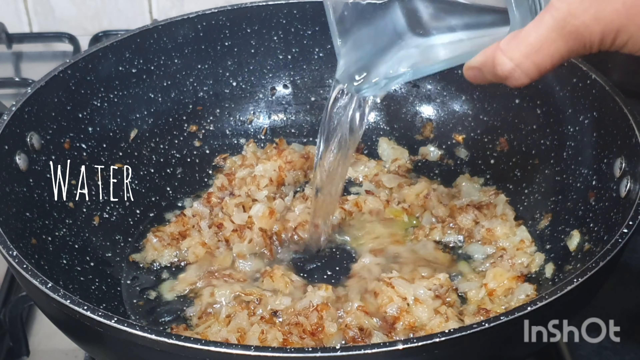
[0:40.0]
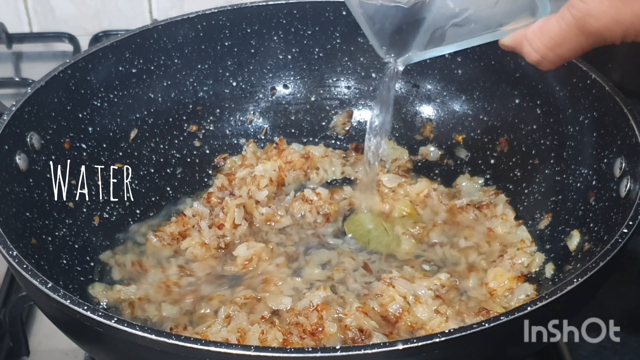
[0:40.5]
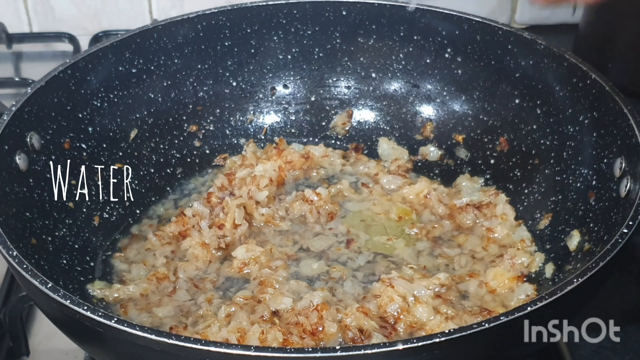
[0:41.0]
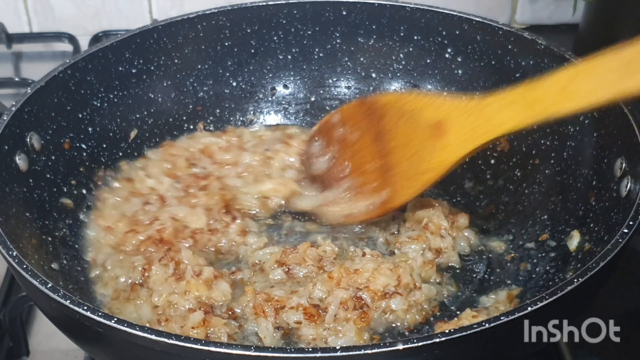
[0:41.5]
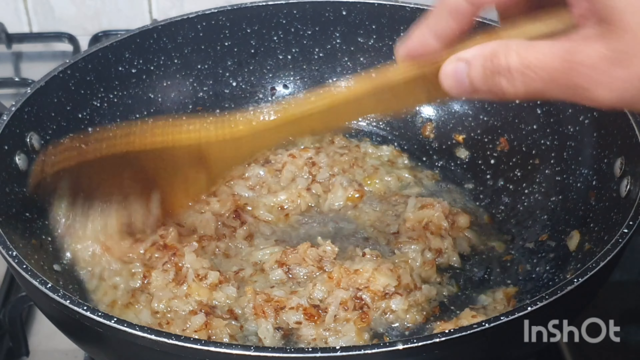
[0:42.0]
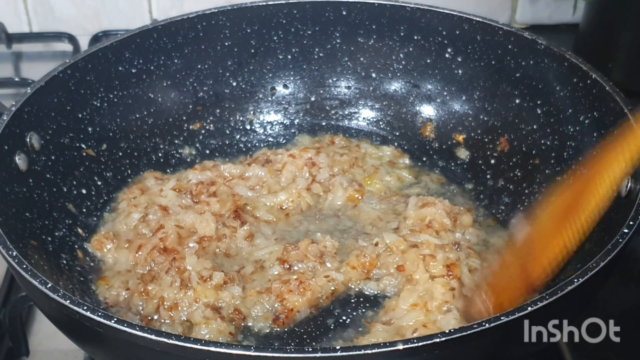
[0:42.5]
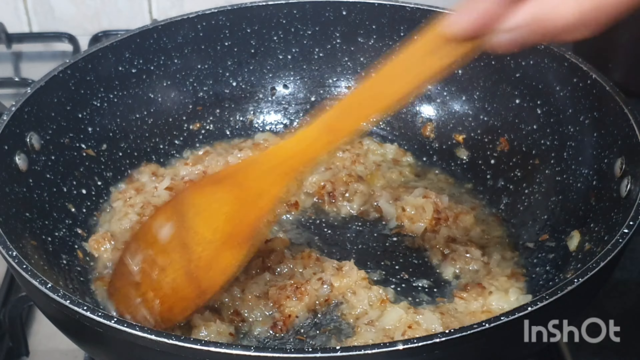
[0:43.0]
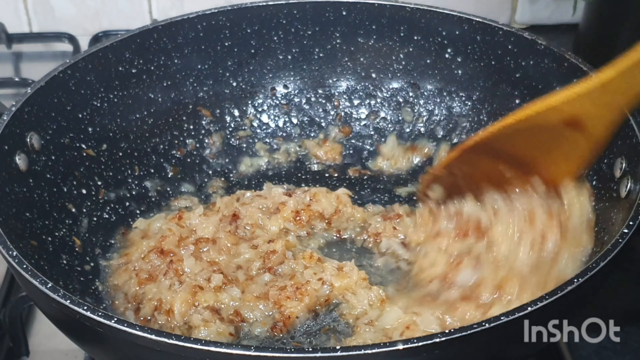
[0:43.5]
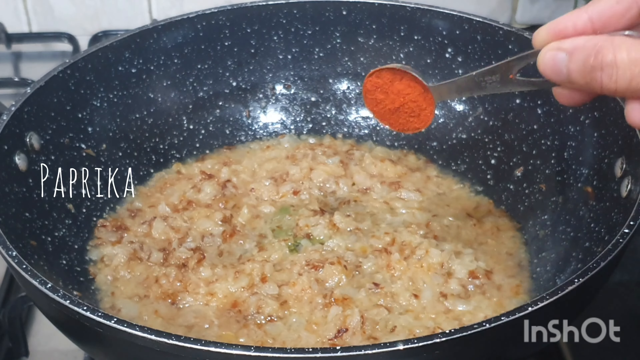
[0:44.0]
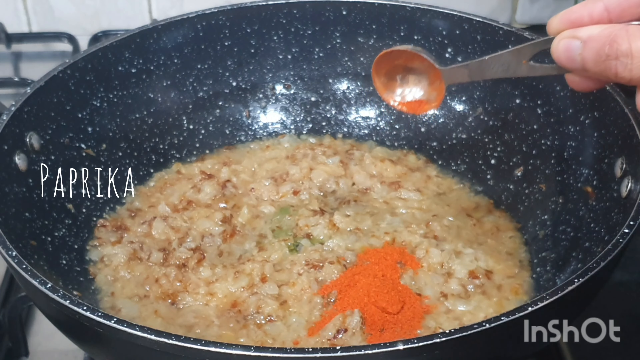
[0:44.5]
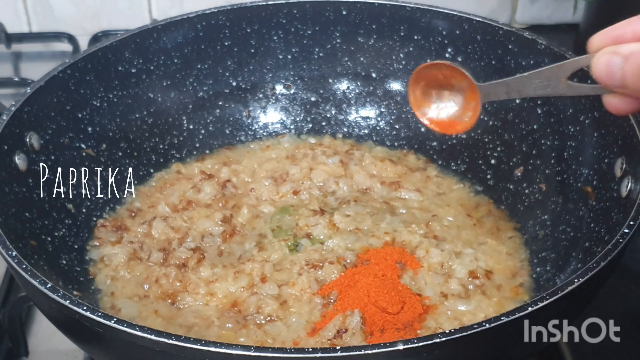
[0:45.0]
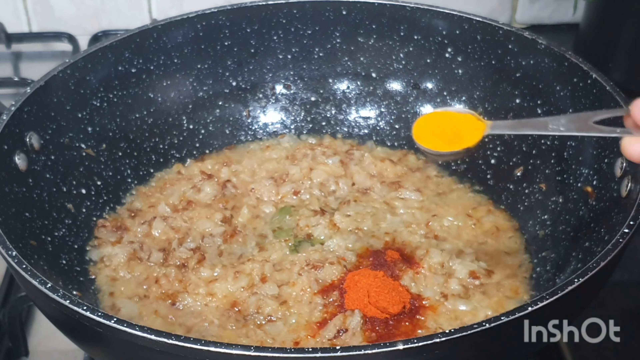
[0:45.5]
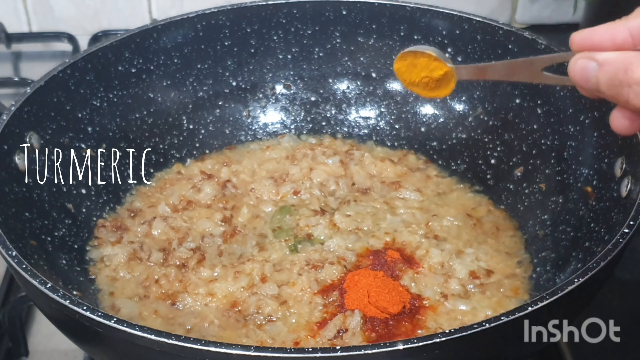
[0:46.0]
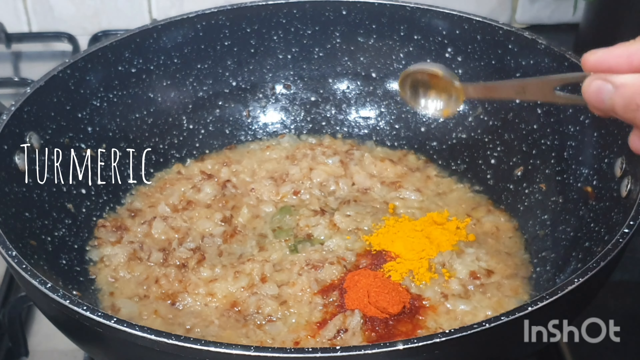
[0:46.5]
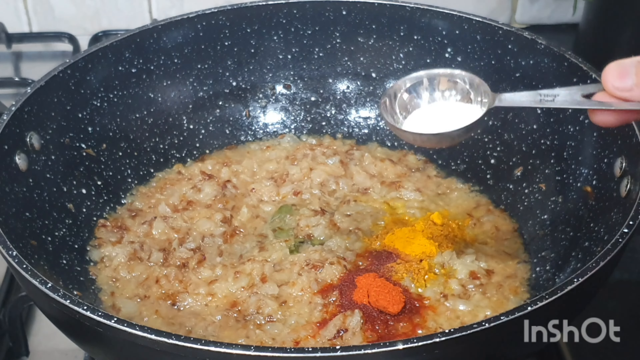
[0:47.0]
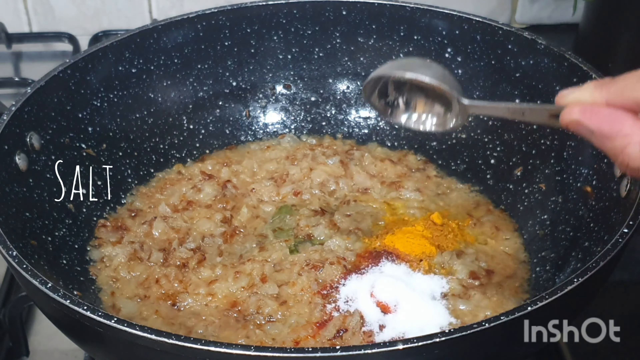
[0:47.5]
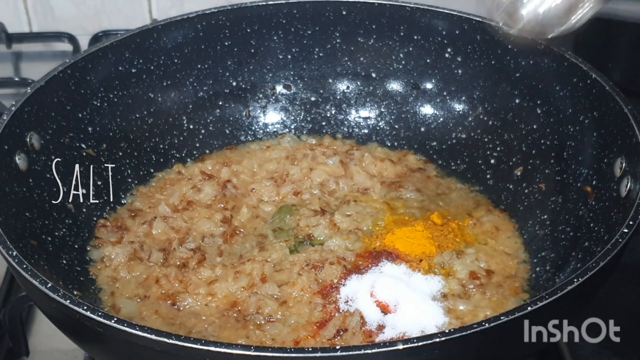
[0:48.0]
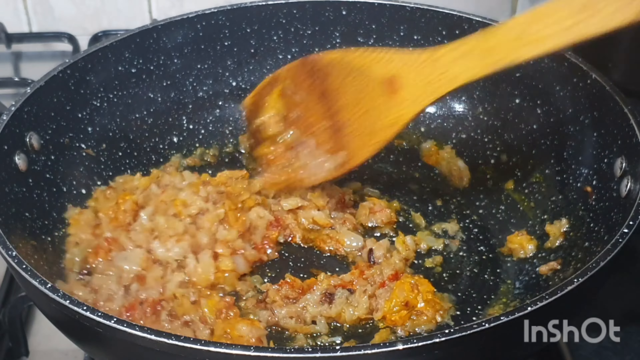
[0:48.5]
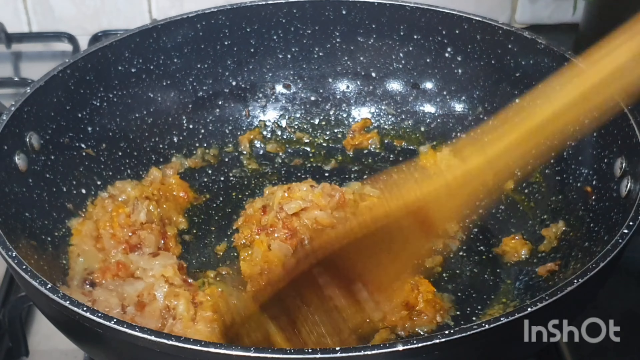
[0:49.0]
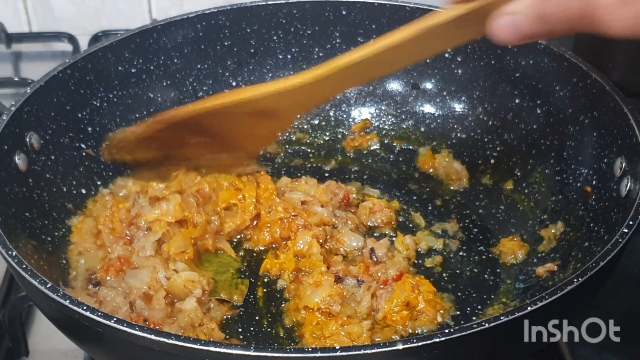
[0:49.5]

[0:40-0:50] More water is added to the spiced onions, which are stirred and kept on the move. Paprika and turmeric are added, and the mixture turns quite yellow. The view stays focused on the shiny pan. A little salt is added. The heat seems moderate, as the food cooks gently.